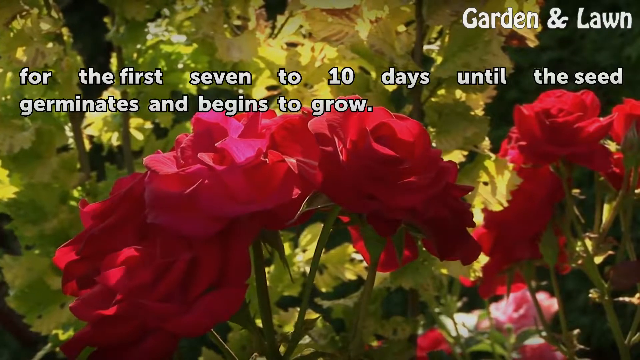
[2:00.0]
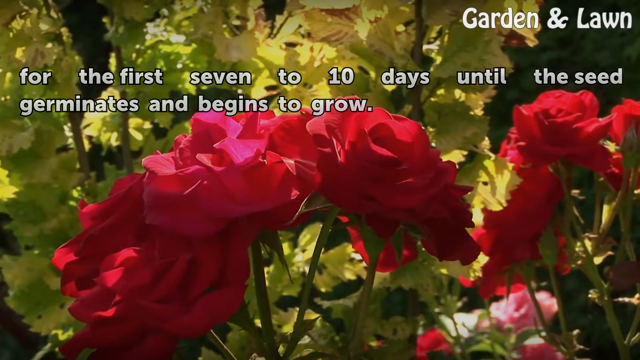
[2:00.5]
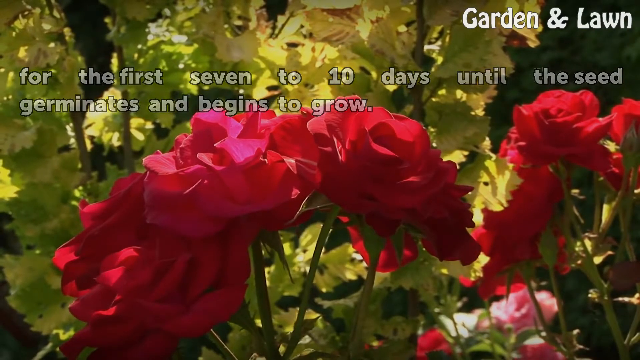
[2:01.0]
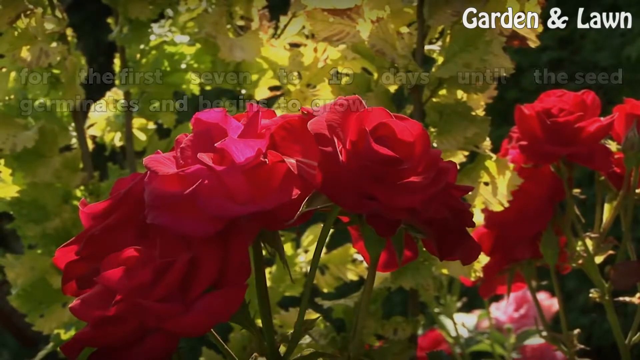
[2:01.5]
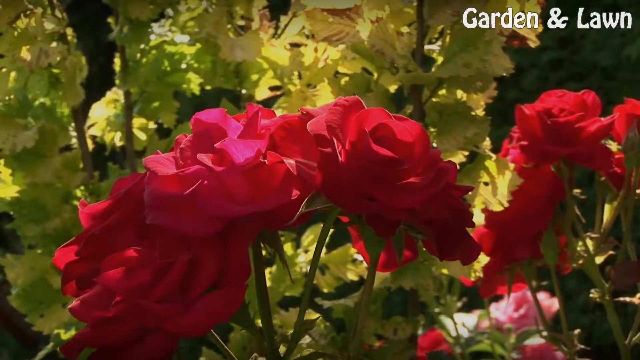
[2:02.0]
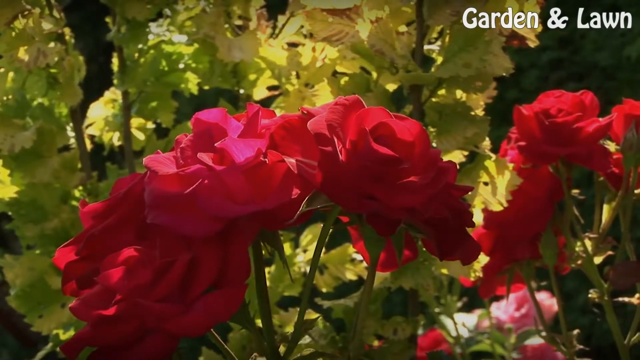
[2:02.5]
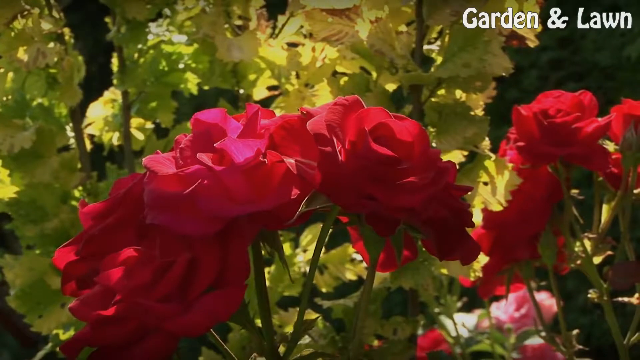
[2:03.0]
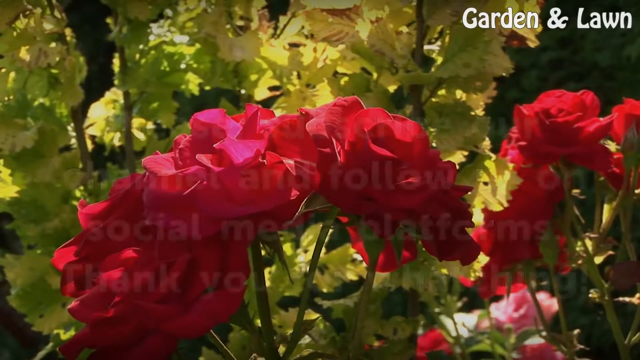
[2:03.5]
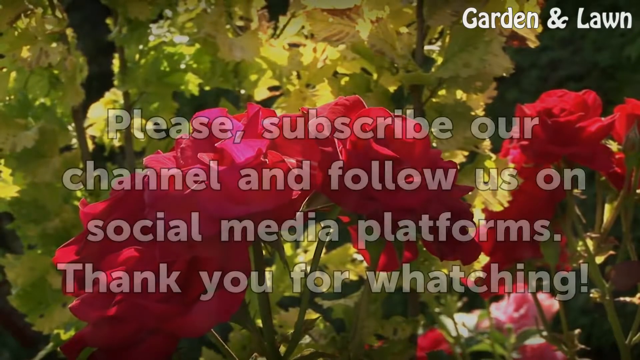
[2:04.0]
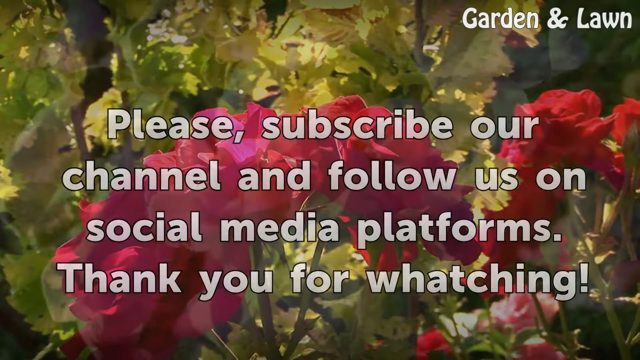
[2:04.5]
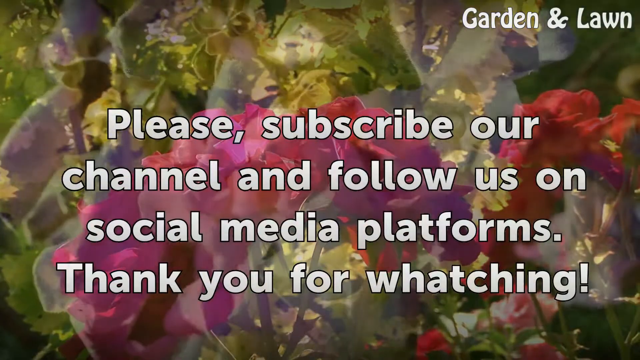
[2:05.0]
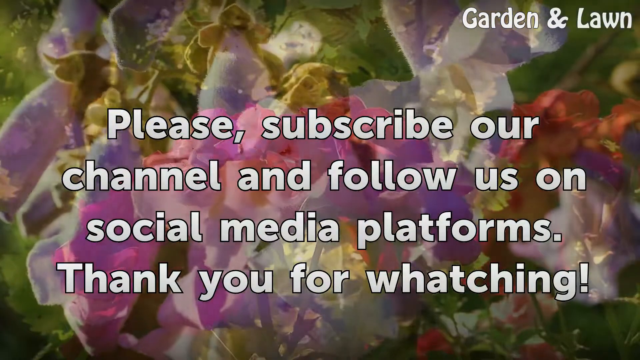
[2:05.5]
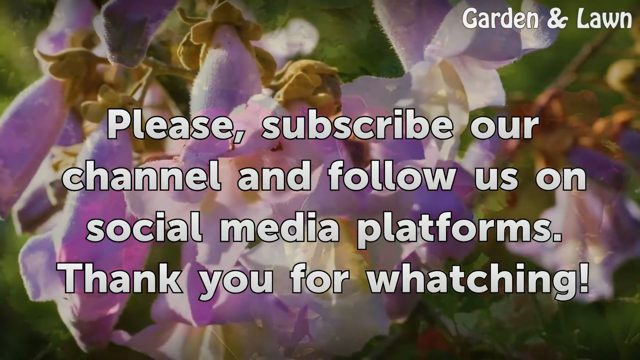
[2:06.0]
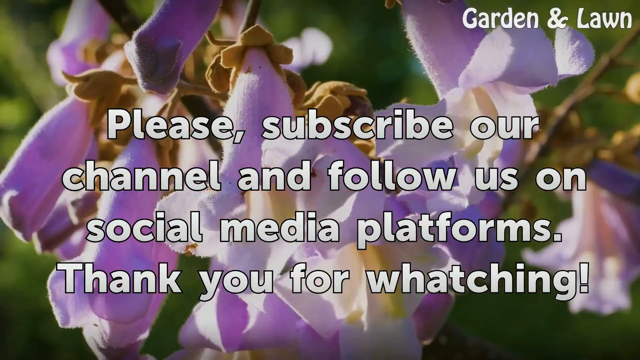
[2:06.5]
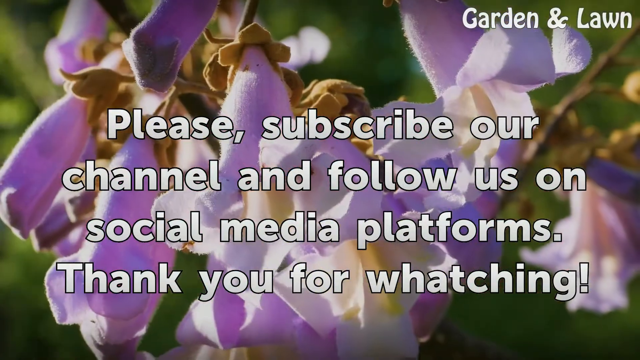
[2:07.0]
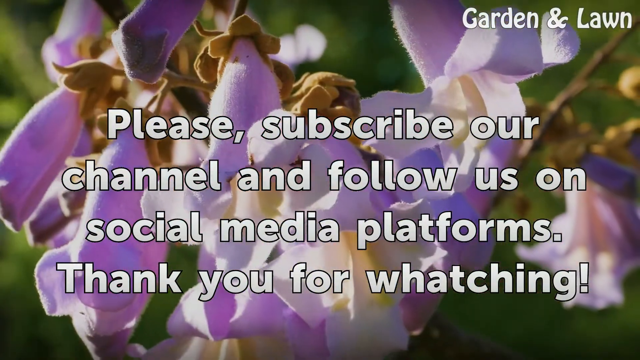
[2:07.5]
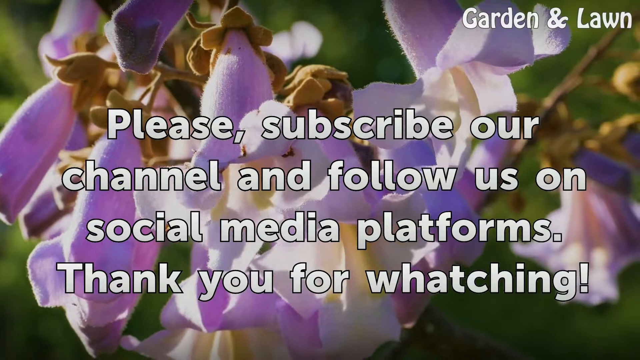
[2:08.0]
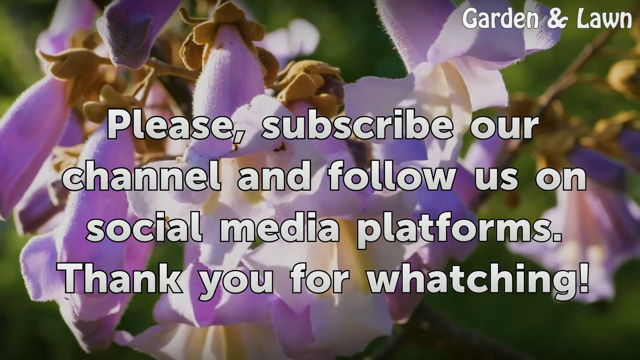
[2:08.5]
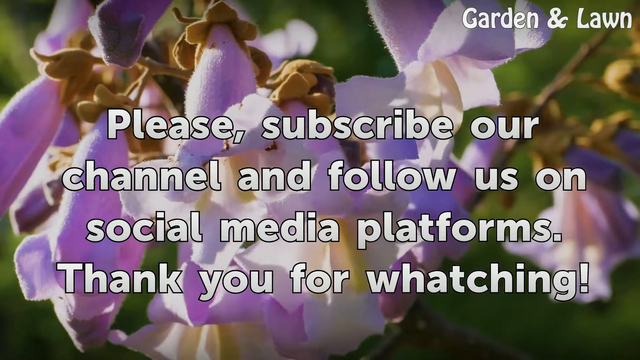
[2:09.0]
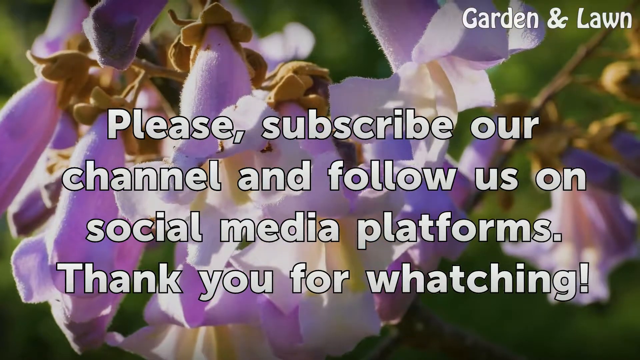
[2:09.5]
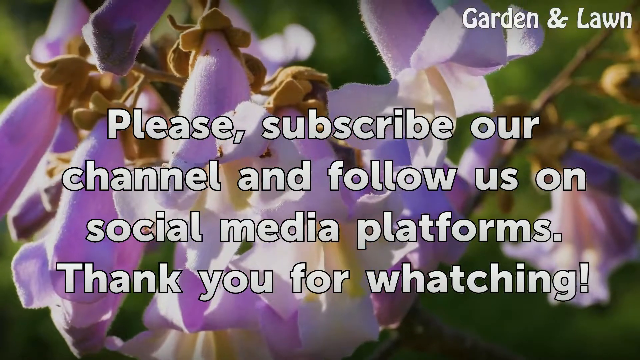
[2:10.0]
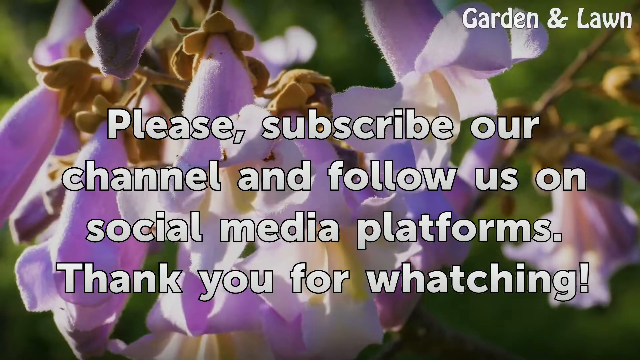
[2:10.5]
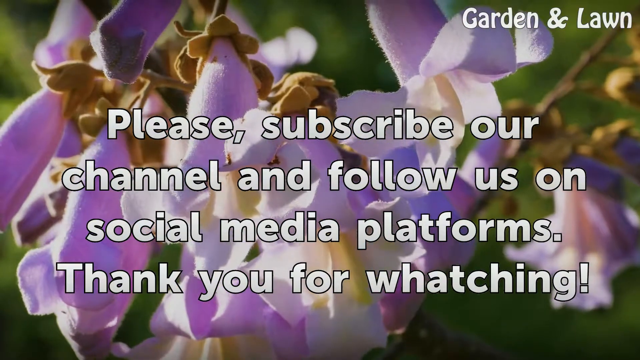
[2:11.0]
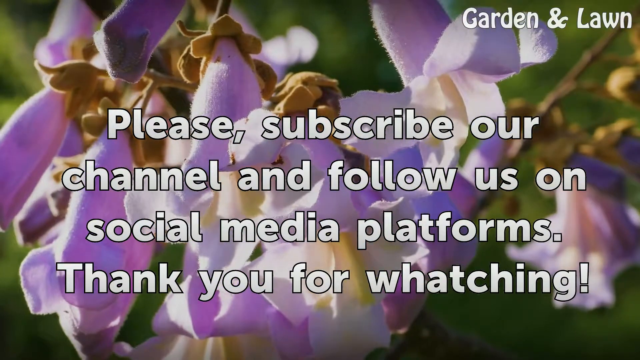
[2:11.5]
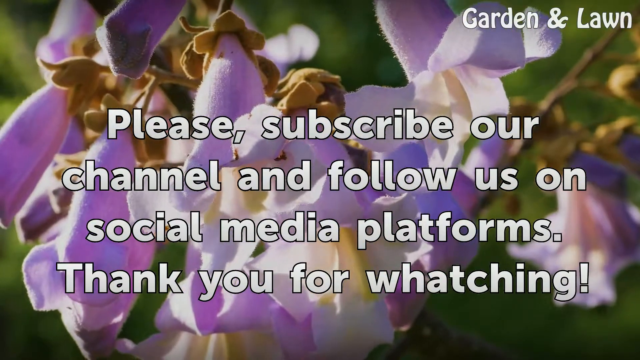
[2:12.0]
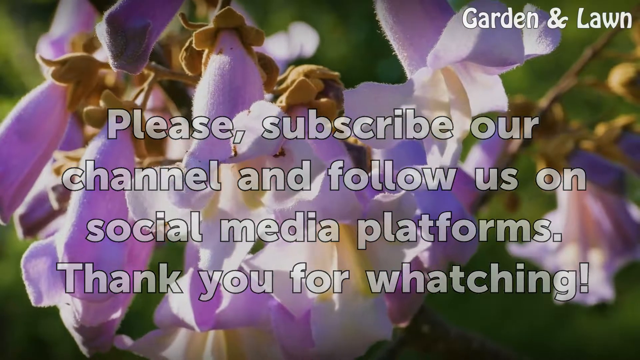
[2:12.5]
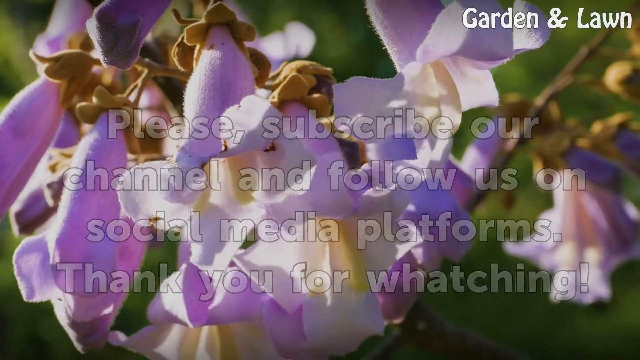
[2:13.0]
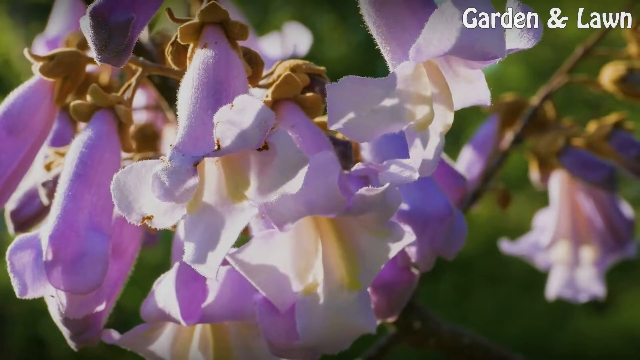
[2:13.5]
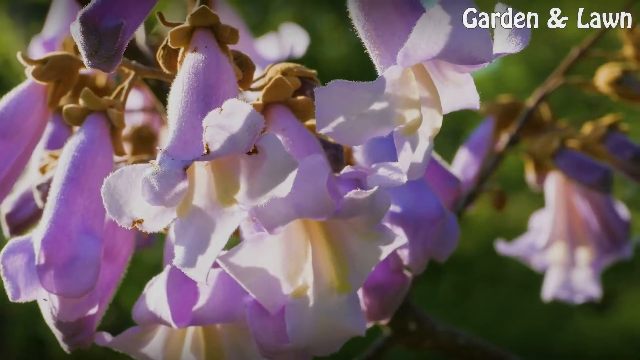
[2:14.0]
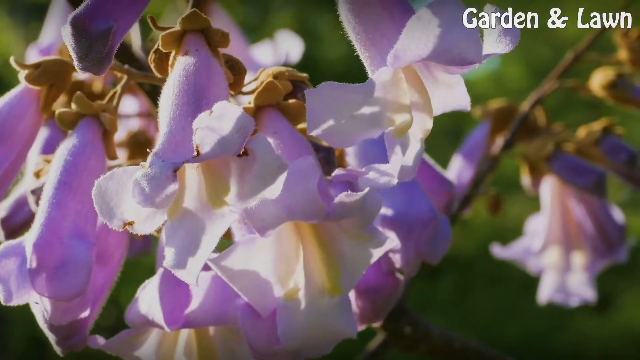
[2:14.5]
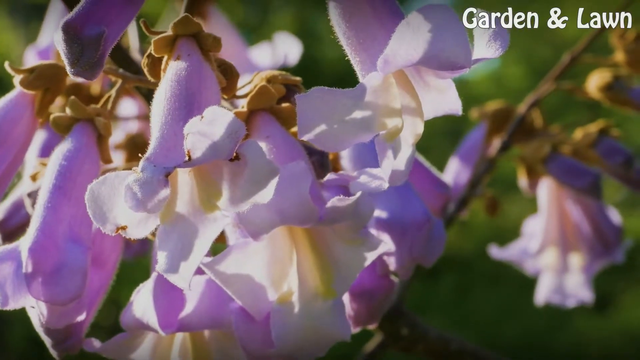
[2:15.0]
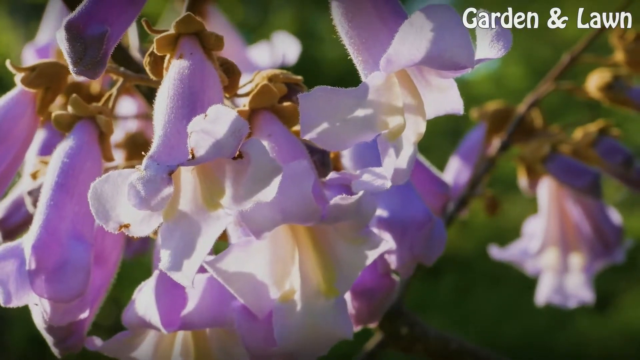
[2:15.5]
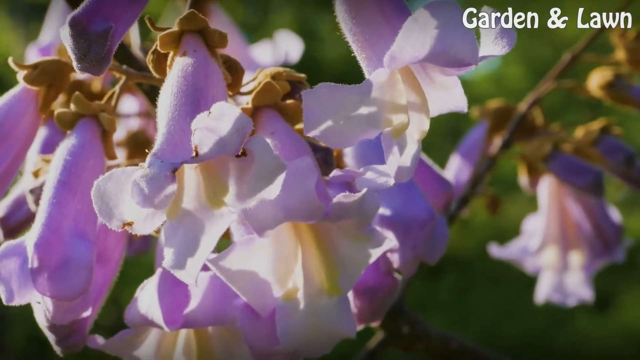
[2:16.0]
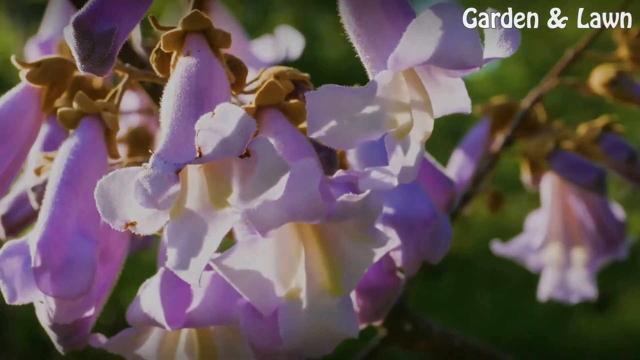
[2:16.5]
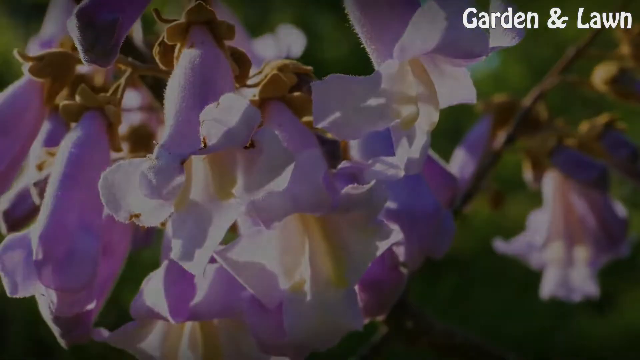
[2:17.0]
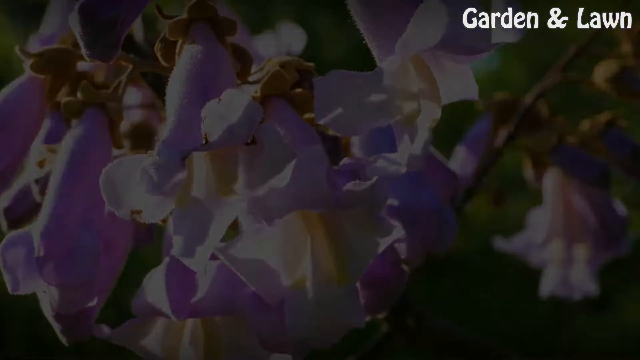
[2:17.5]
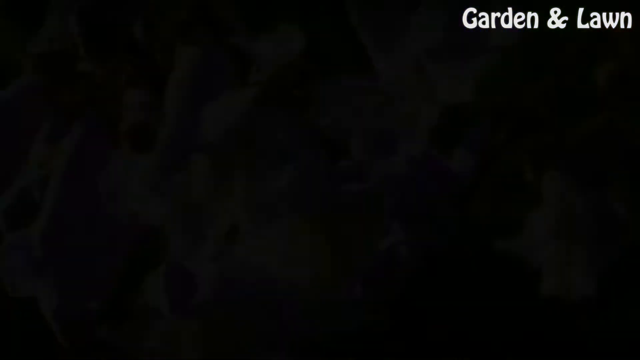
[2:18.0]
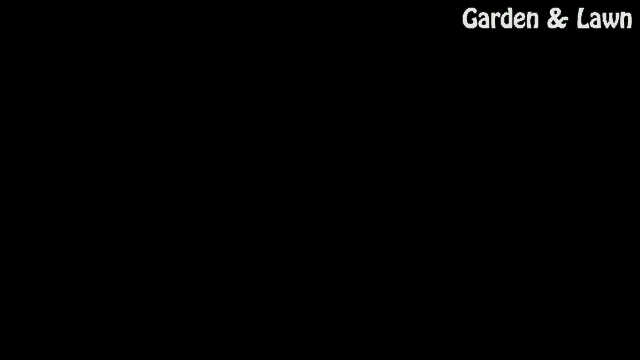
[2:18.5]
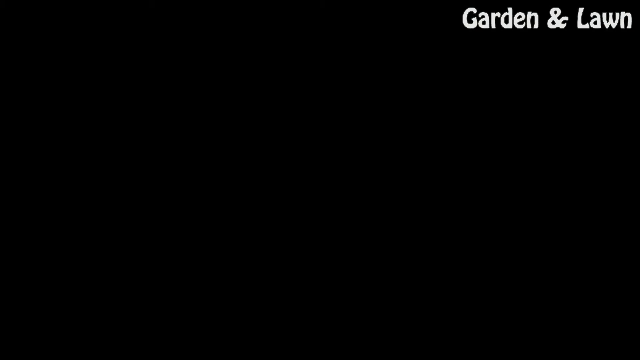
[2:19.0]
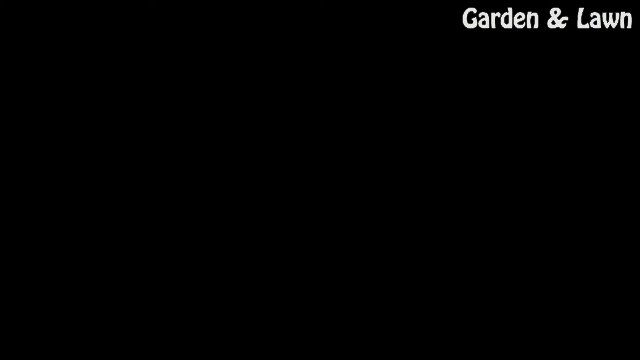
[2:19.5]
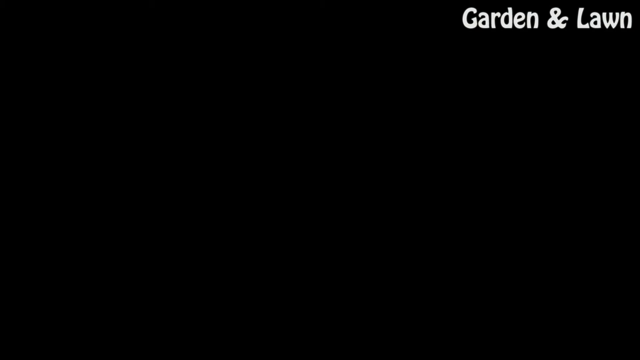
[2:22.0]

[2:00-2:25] Three hands in different shades of blue, sky blue and light blue among them, appear with a message reading "garden and lawn", "7 million deaf people, 300 sign languages, and unlimited potential" and website addresses ending in .org, bda.org.uk and deafaustralia.org.au. An orange flower then comes onto the screen with "how to reverse the effect of Roundup weed killer" on a green background. A message says Roundup is a herbicide widely used to control unwanted growth of grass, weed and small brush, featuring glyphosate as the primary active ingredient, used in residential and commercial applications, that its effect is the dieback of grass and weed to which it was applied, and that seeding an area can reverse the effect following dieback. A pink flower appears with the things to use: rake, trash bag, shovel, small tiller, grass seed, straw, starter fertilizer and water. Another message says to let the Roundup work its way through the plant to the root for 7 days, where it becomes neutralized in the soil, gather the dead grass and weed from the soil with the rake, rake the treated area thoroughly, pull roots from the ground, dispose of dead vegetation properly, and prepare the soil for seeding using a shovel. The background behind this message is a purple flower with whitish and green. Another message follows about using a rake or small tiller to turn the soil and break it down in preparation for seeding, spreading grass seed over the prepared ground, and choosing a grass based on location.